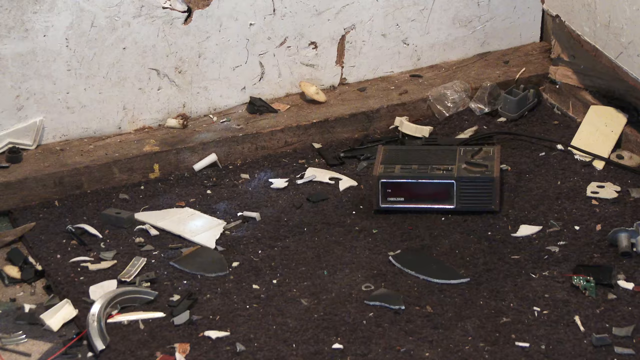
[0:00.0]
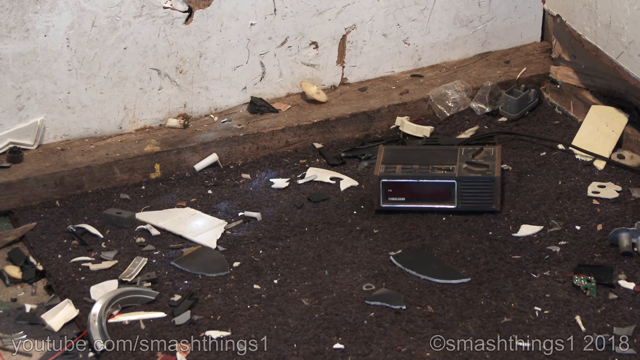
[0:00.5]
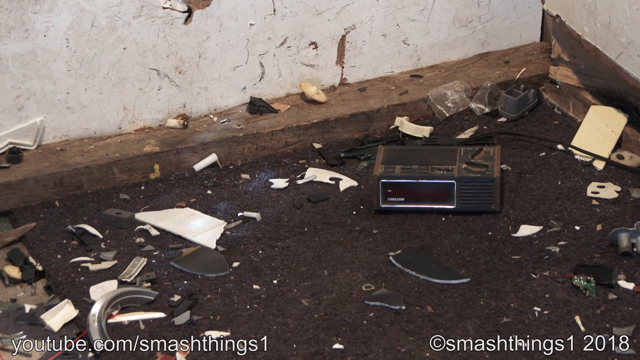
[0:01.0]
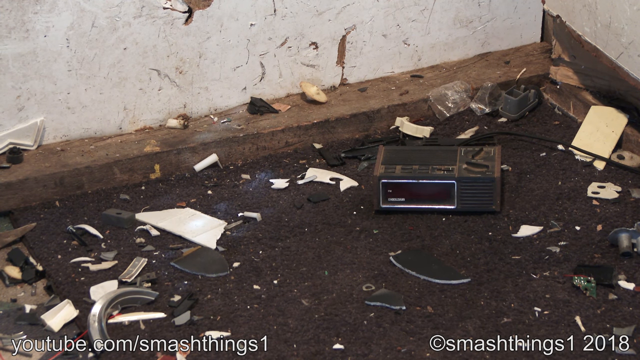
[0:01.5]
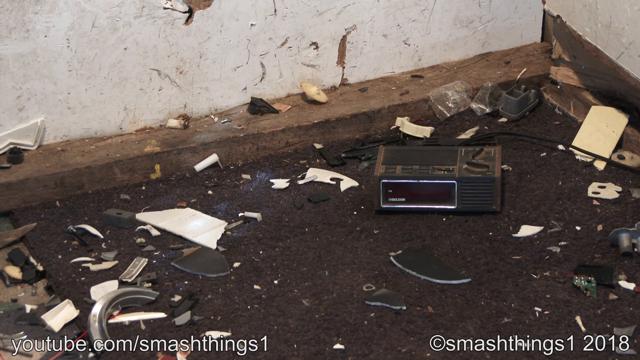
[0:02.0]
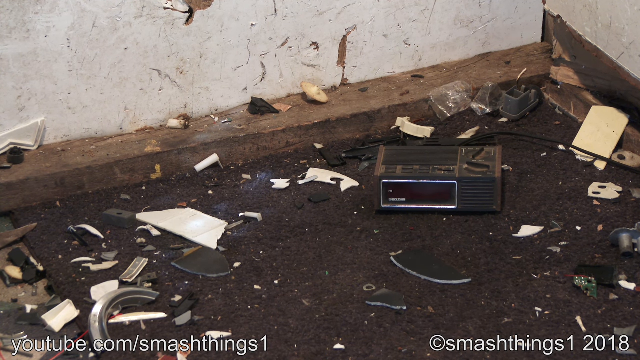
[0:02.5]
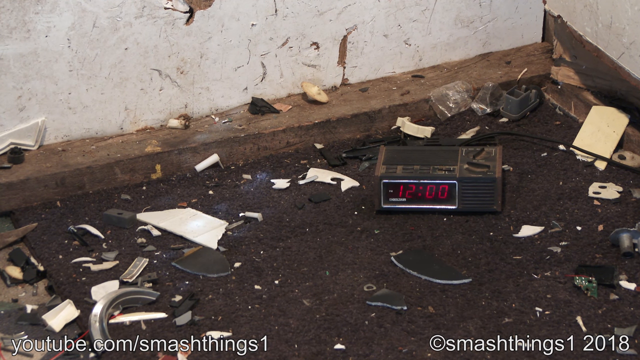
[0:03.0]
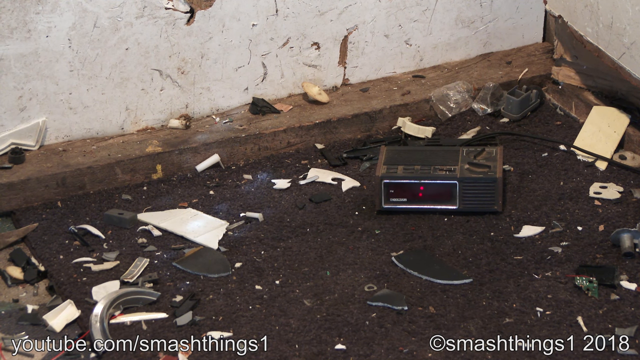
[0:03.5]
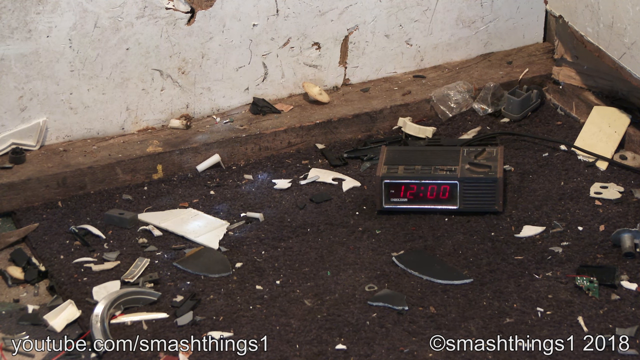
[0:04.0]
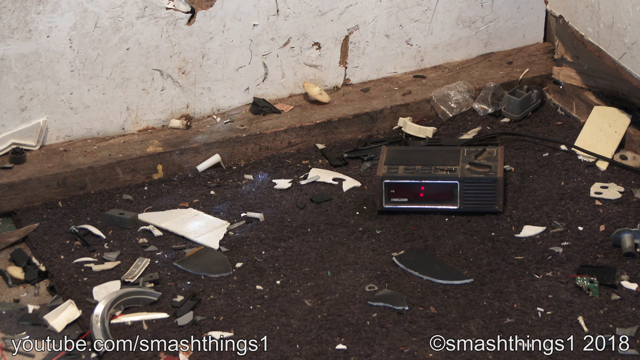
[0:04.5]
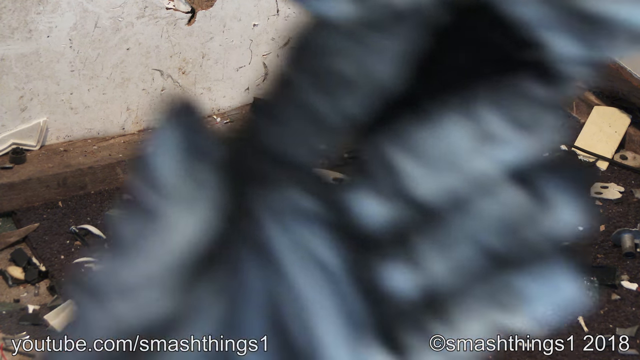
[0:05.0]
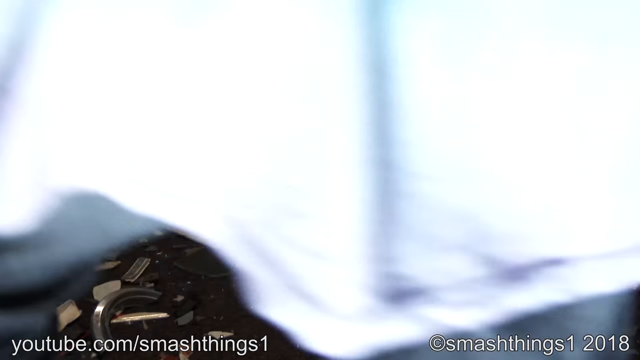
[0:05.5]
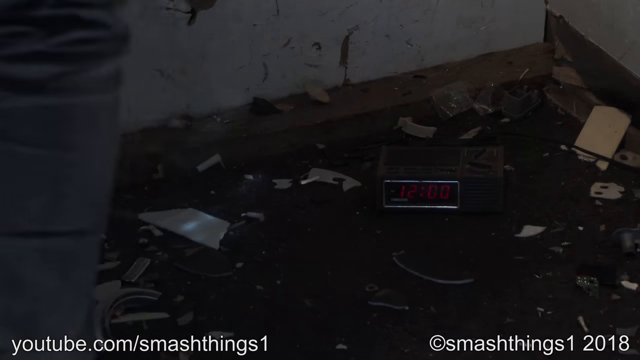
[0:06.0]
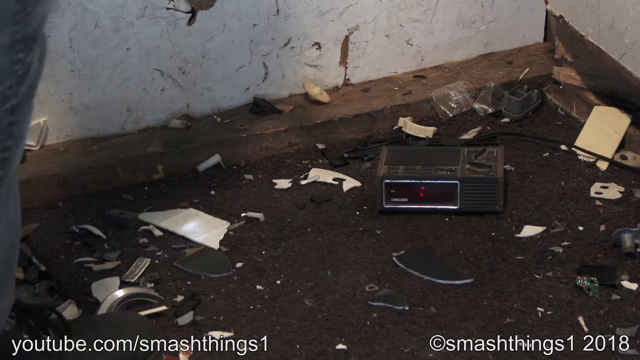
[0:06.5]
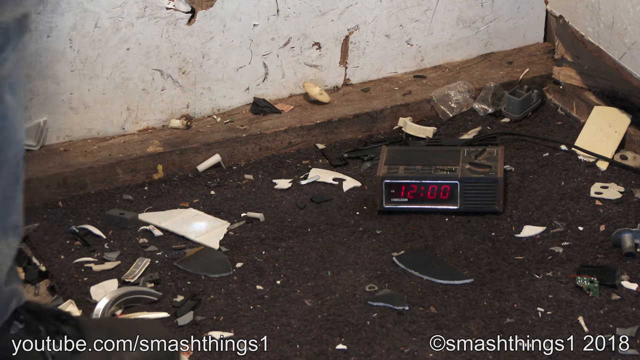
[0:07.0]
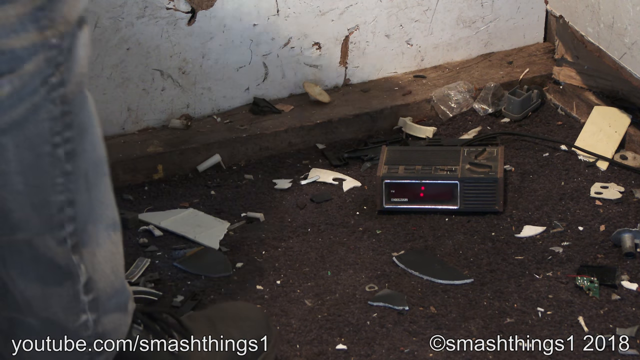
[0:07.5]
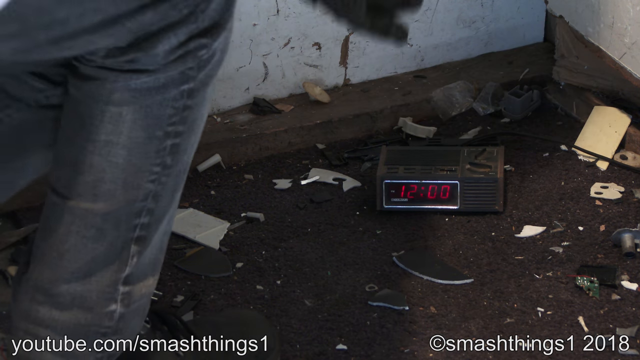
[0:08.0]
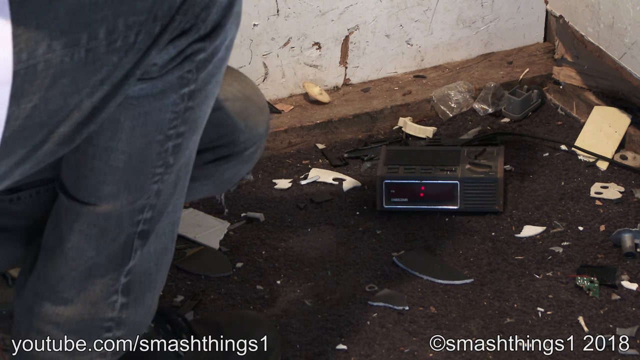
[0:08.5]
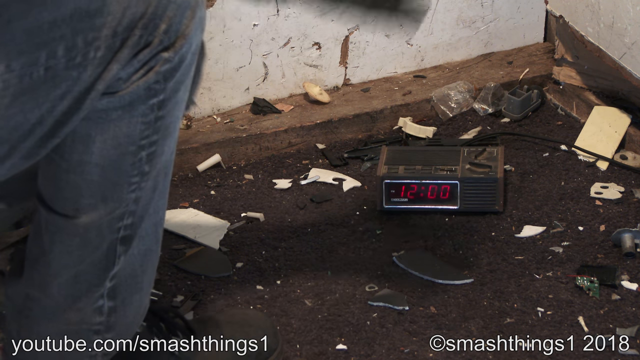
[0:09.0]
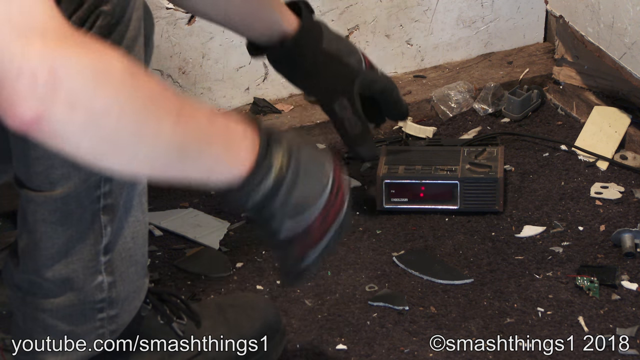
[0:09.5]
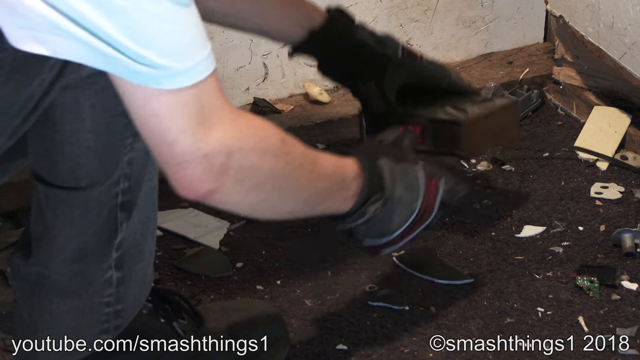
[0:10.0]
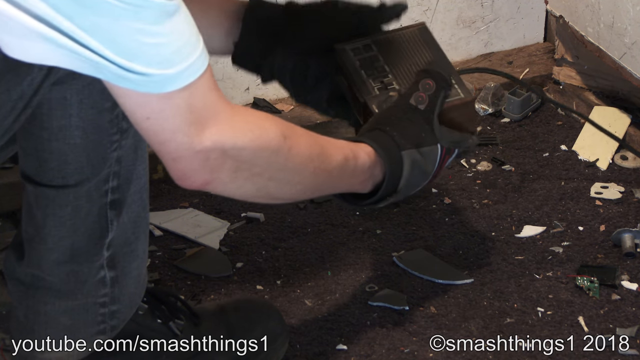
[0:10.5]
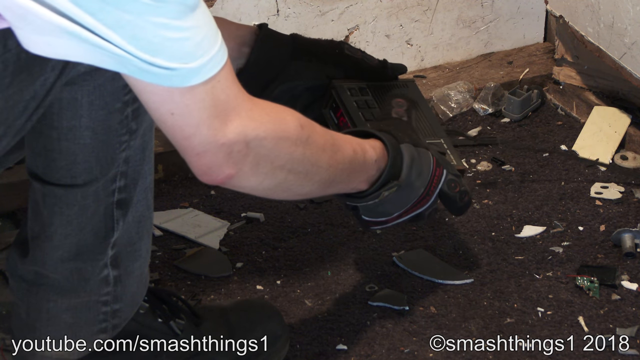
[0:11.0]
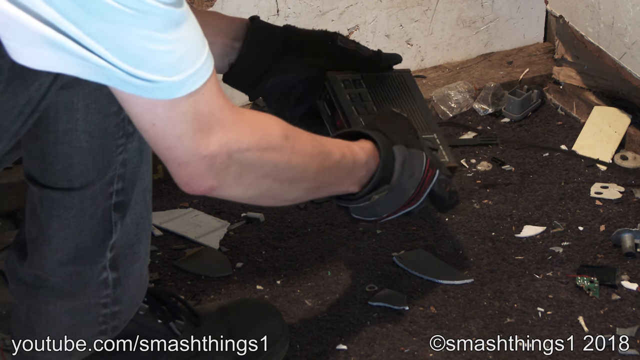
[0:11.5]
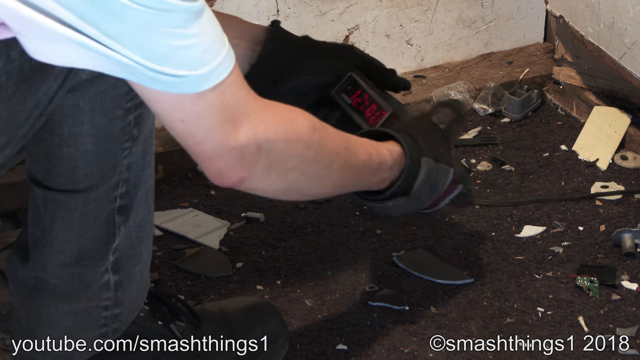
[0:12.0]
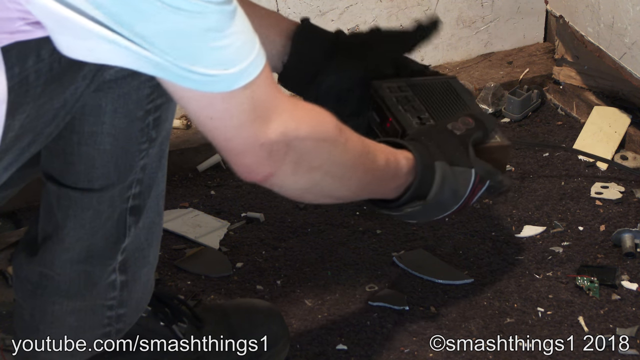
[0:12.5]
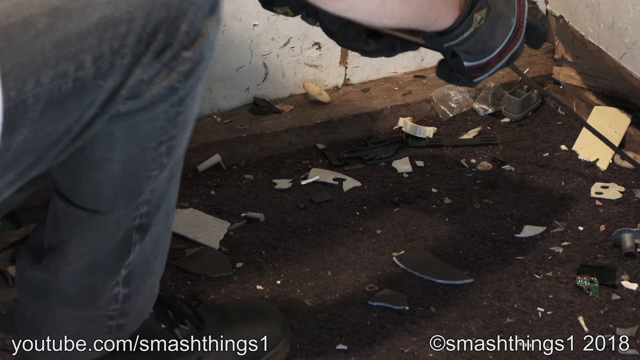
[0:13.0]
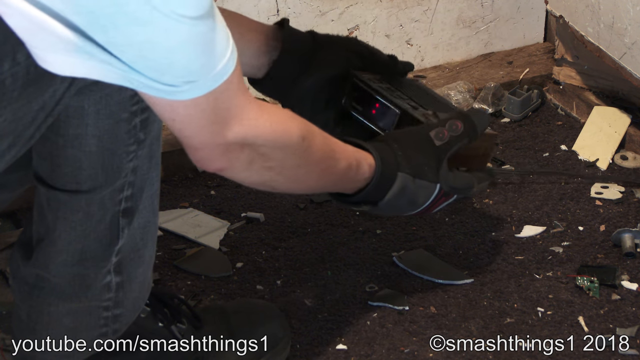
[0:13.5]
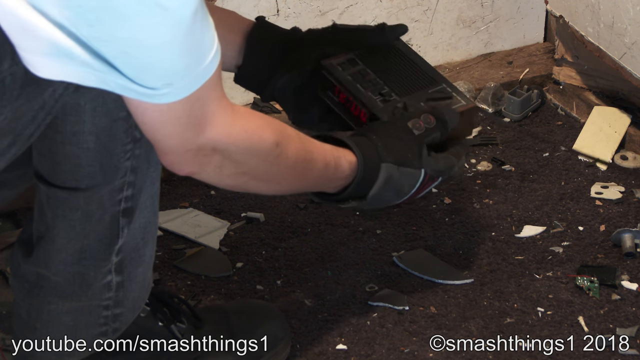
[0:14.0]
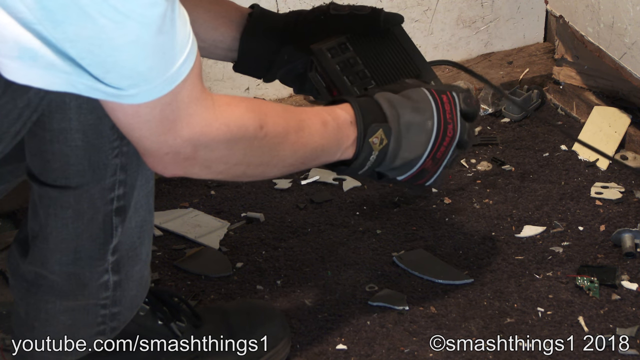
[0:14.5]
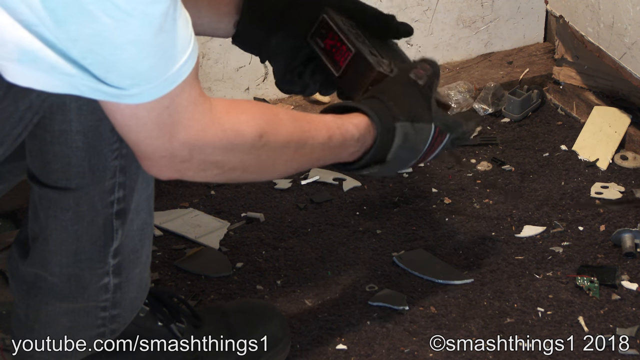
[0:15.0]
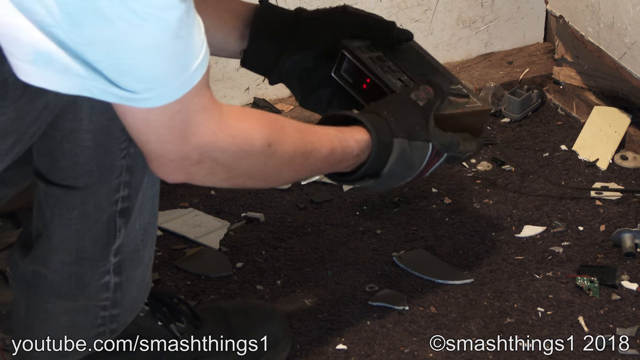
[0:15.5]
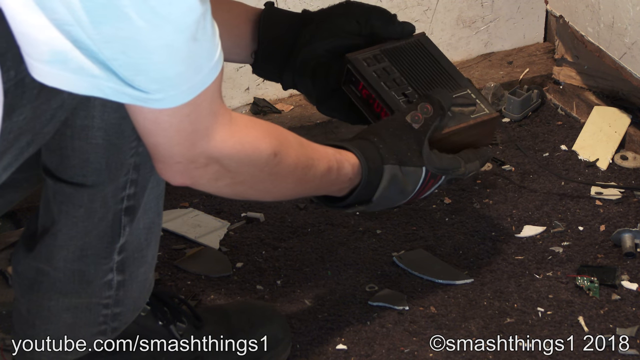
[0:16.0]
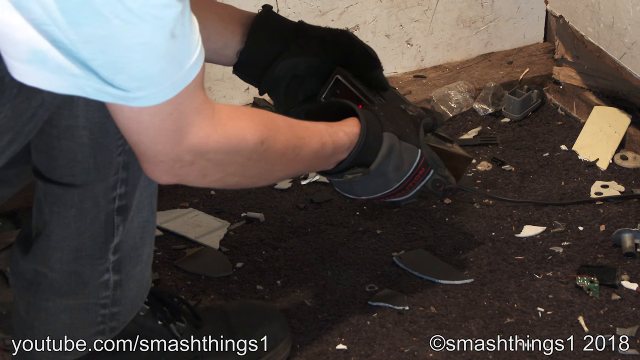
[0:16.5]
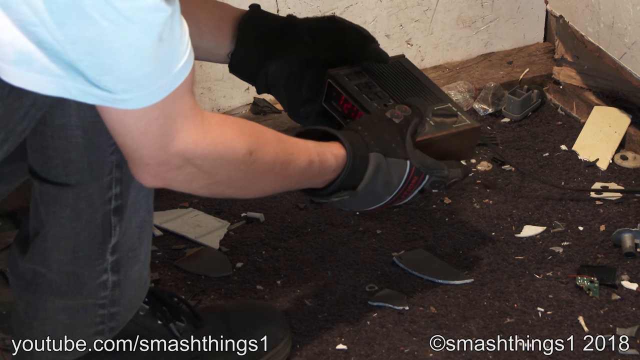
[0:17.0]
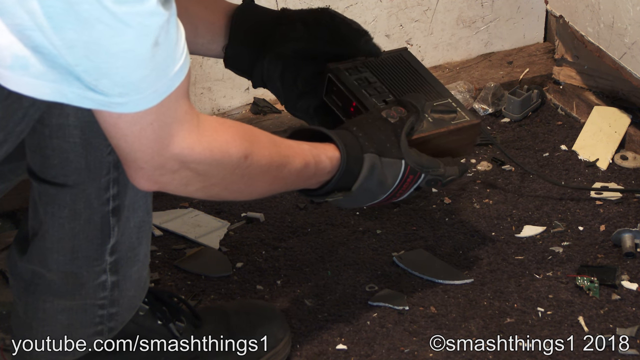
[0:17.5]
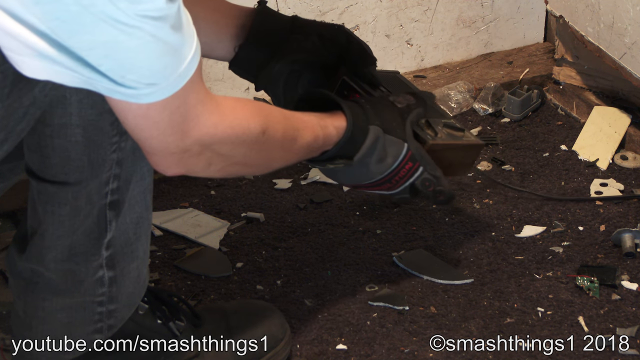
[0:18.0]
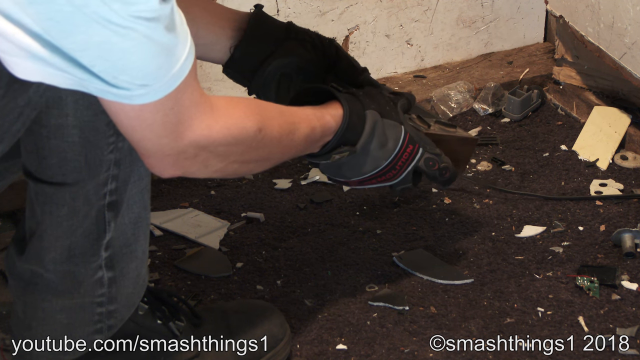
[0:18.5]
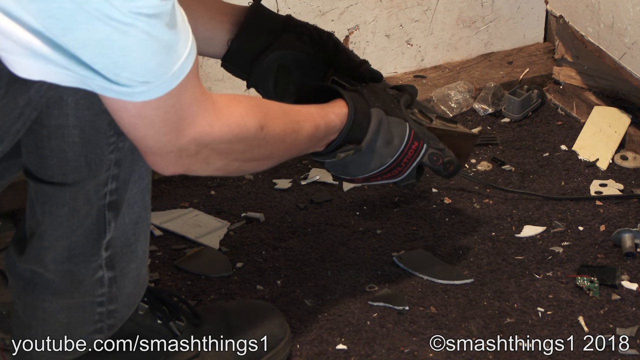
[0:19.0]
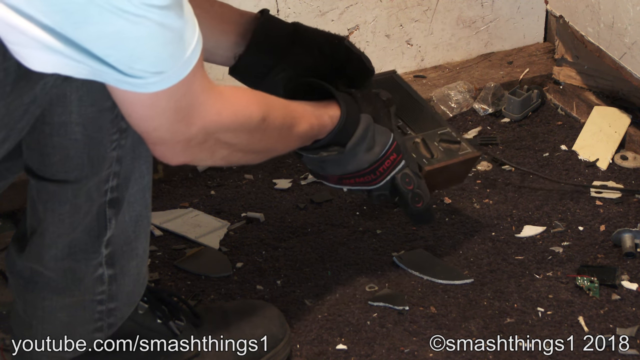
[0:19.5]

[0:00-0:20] The scene opens on a rather dirty-looking floor or ground that looks like either dark dirt or a muddied area, lined with a wooden beam along the back of a wall, with what looks like worn stucco peeling against the wall. White text at the bottom of the screen reads "youtube.com, smash things, copyright smash things 1, 2018." A pair of arms comes down from the top of the screen. The hands of this Caucasian or light-skinned person wear dark gloves that look to be heavy-duty, and the top of a white t-shirt is visible. Based on the text, the setting appears to be a smashing room.